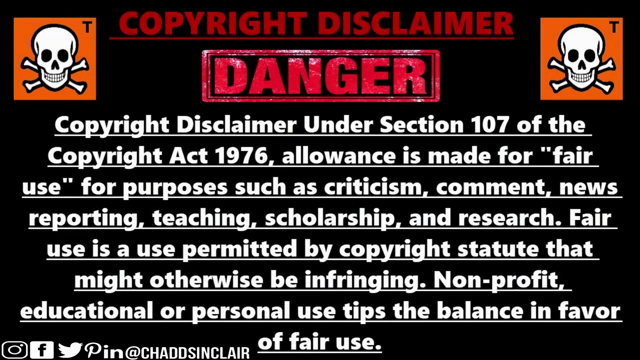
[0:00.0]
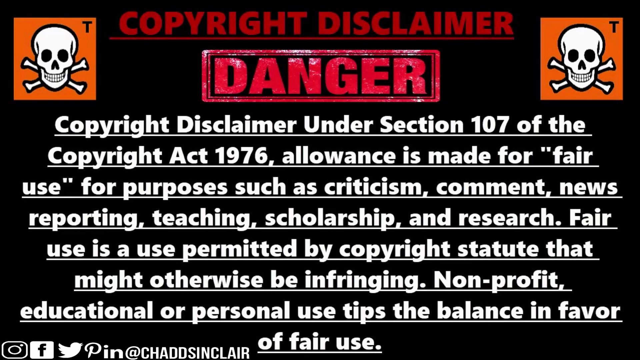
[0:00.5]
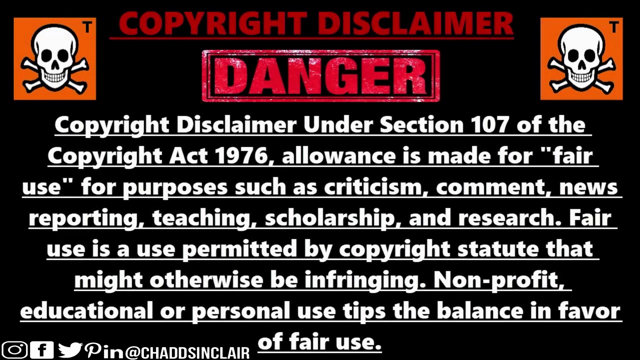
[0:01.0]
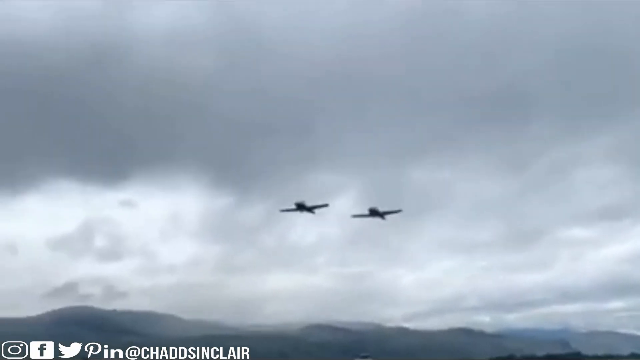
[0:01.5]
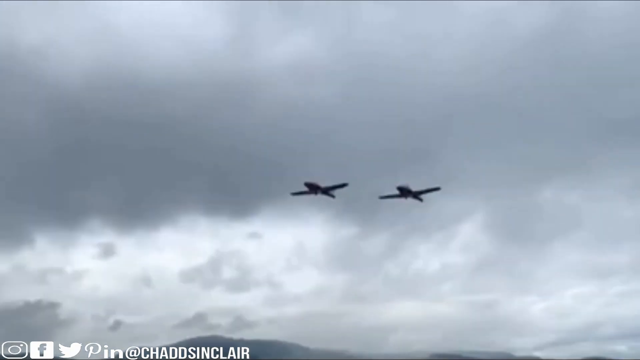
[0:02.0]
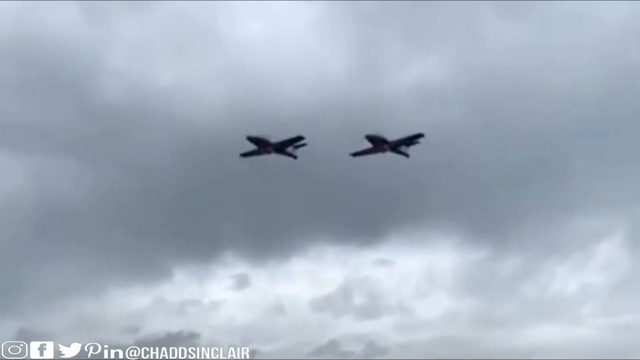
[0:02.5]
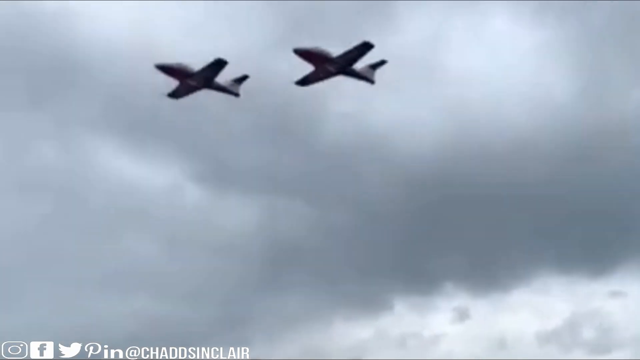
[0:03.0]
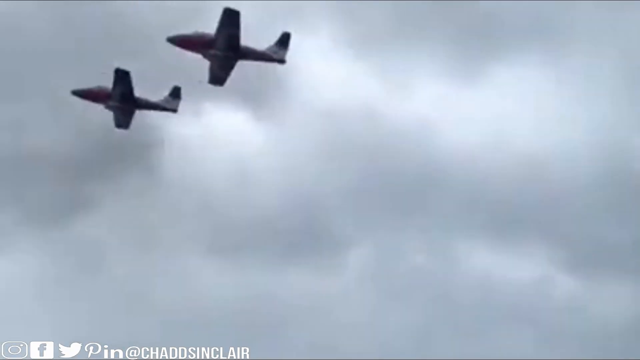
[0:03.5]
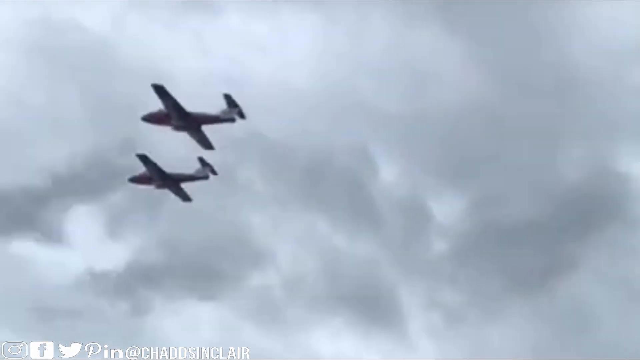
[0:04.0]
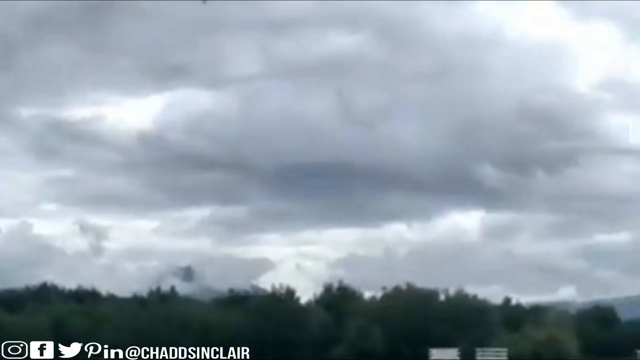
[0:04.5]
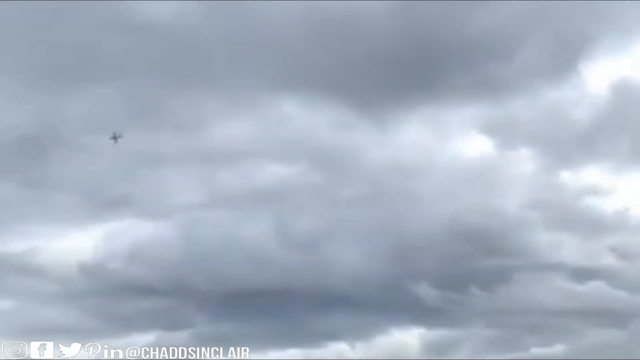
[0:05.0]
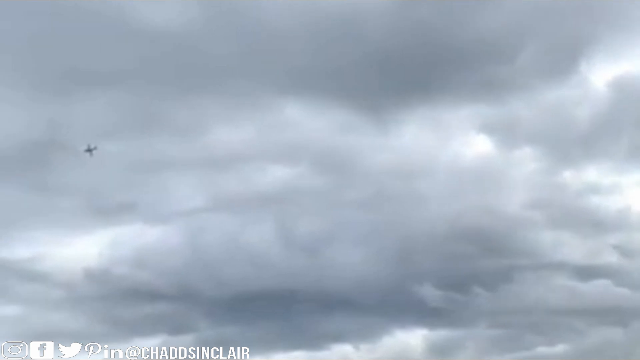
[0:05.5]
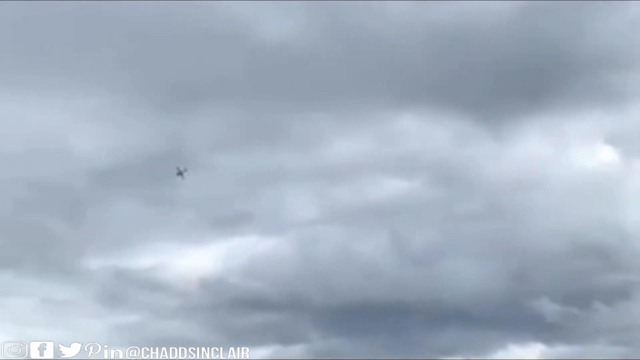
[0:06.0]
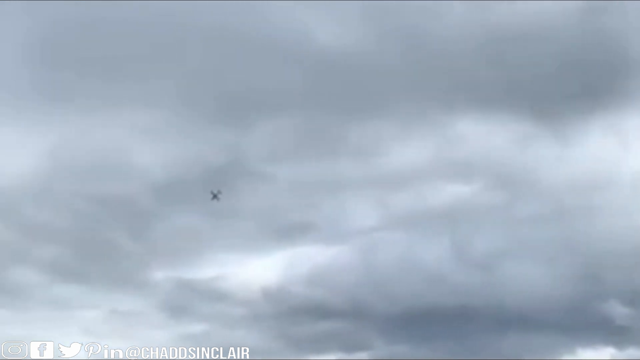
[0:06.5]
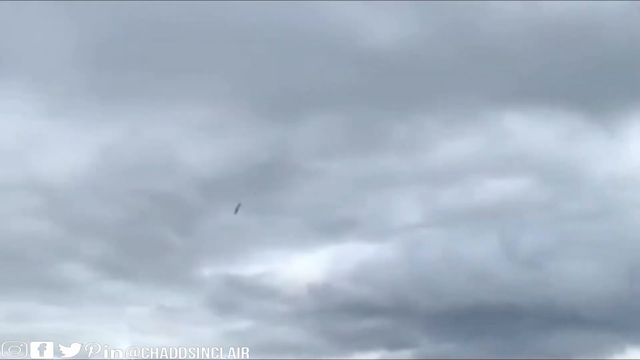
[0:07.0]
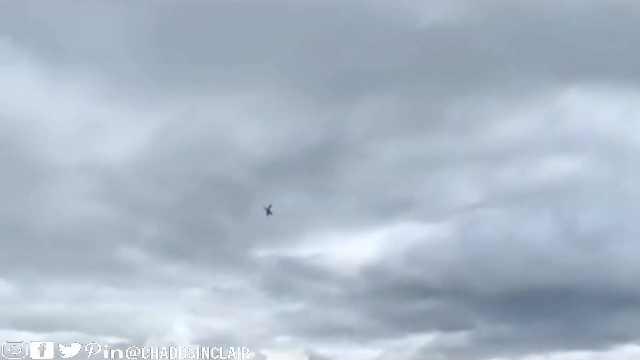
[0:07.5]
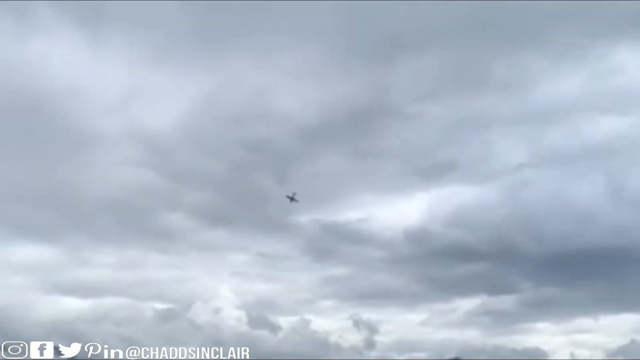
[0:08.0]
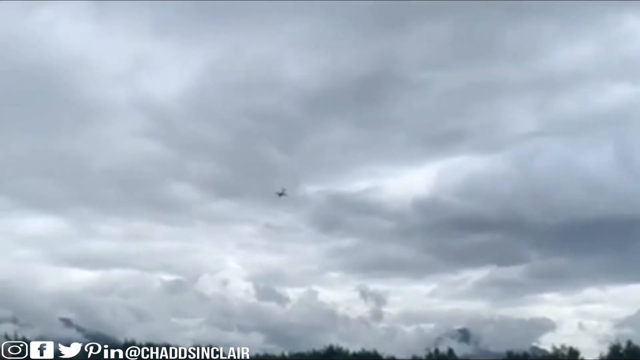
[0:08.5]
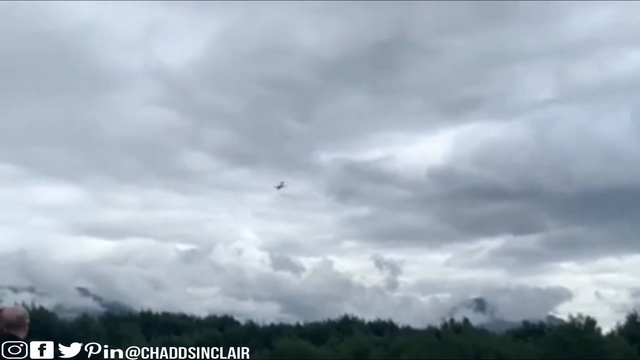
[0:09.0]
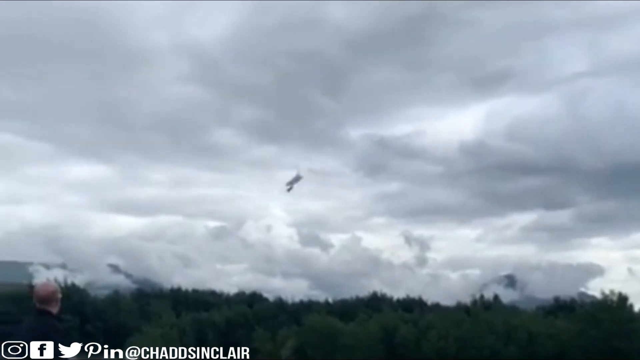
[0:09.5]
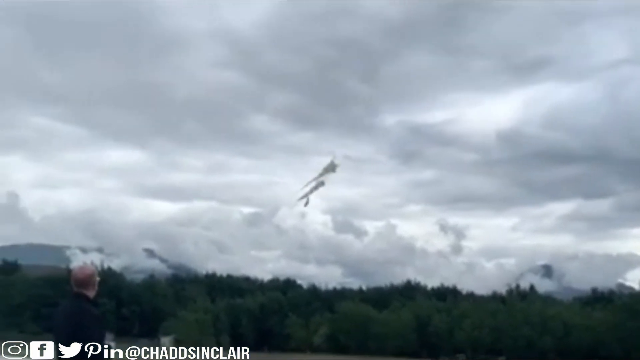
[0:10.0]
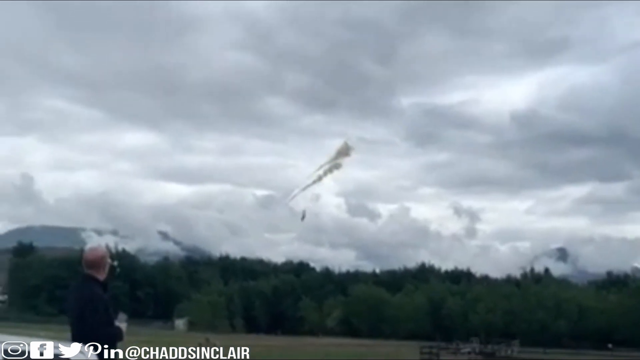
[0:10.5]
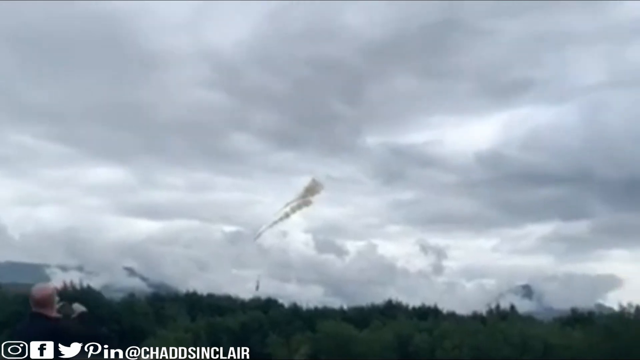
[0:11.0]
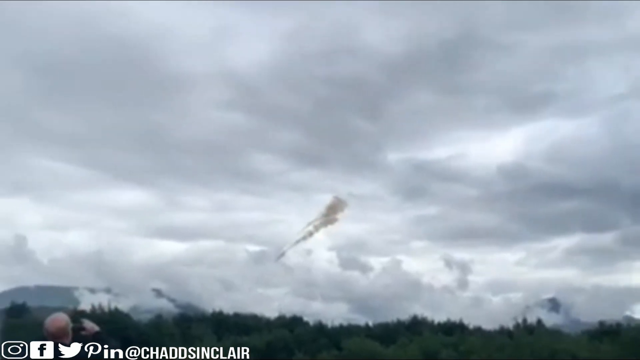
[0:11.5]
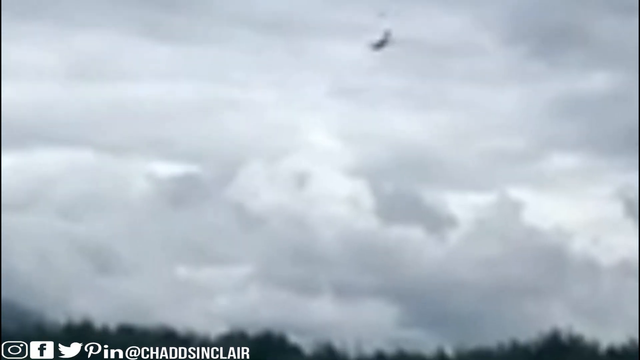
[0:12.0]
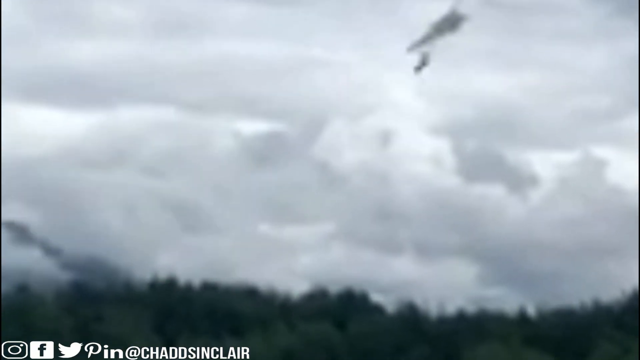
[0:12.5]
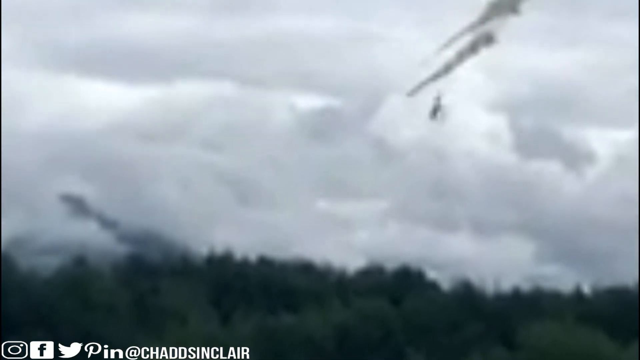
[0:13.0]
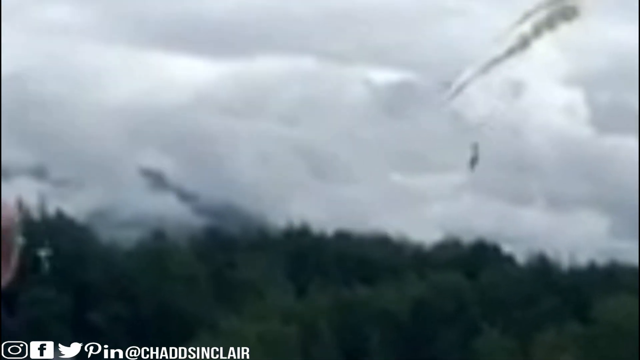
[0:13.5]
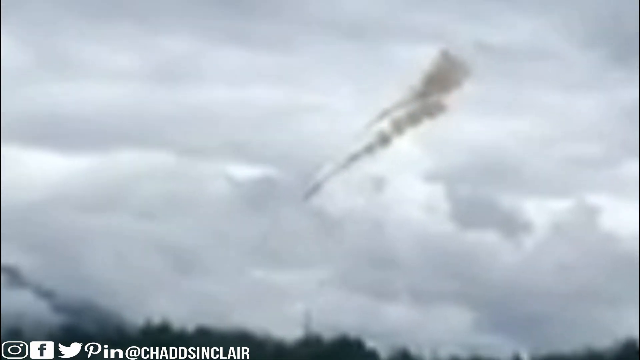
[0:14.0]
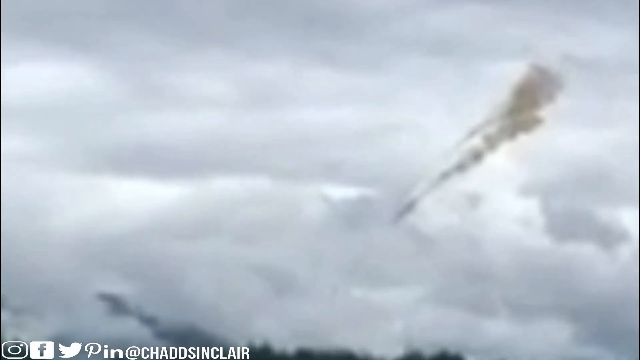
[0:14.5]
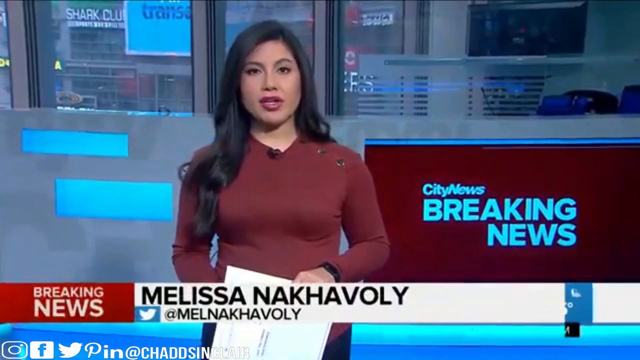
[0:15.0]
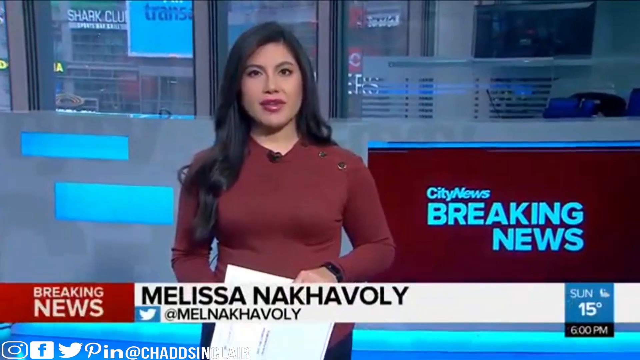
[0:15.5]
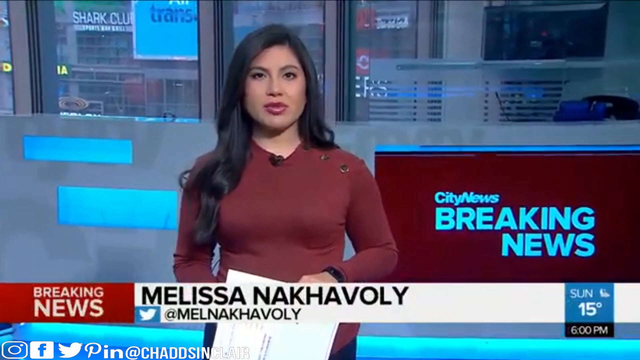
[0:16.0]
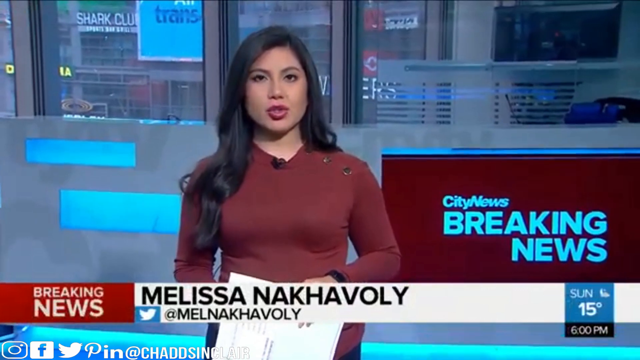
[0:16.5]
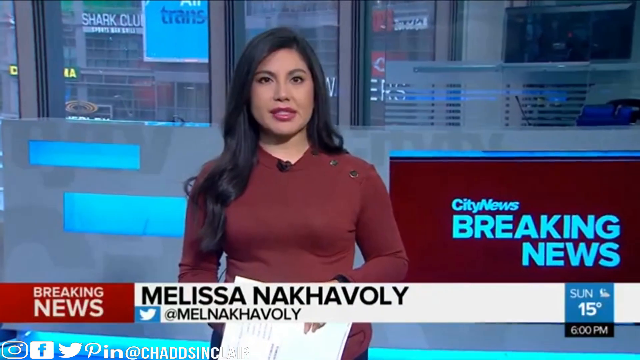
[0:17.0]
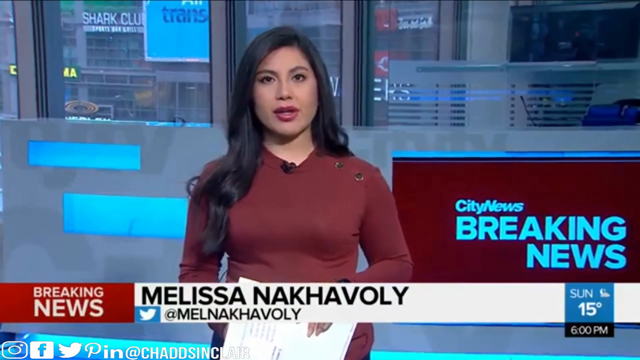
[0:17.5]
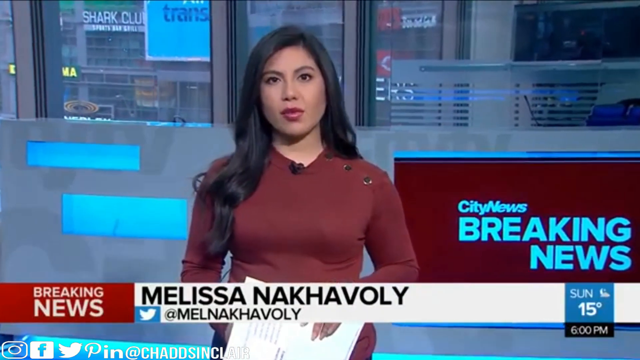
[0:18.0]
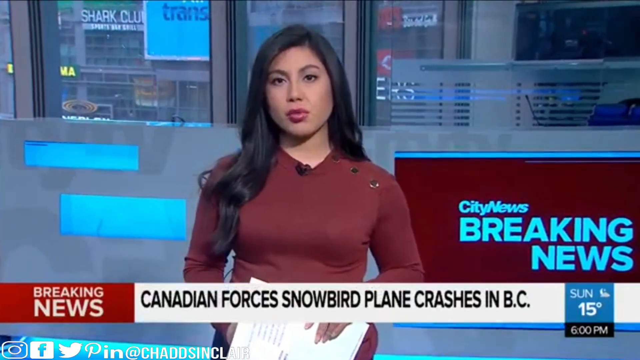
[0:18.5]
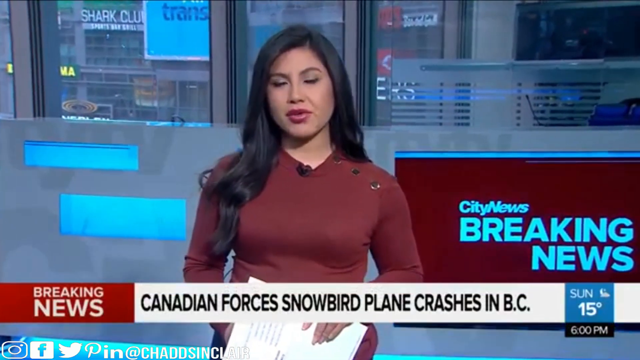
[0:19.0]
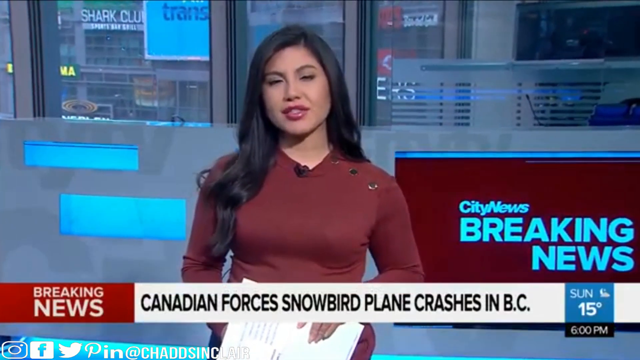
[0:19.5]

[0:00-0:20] In the top left and top right corners of the screen are skulls with bones crossing in an X behind them, each on a square orange background. The text reads "copyright disclaimer, danger" and "Copyright disclaimer under section 107 of the Copyright Act 1976. Allowances made for fair use for purposes such as criticism, comment, news reporting, teaching, scholarship, research." It continues with lines including "Non-profit or personal use tips the balance in favor," and the last line is sort of blurred out. Next, two airplanes fly in a cloudy sky. One airplane goes off on its own and then falls to the ground, with smoke up in the clouds. A news lady appears; she is Asian and wears a maroon shirt, and the screen reads "breaking news Canadian forces snowbird plane crashes in BC."